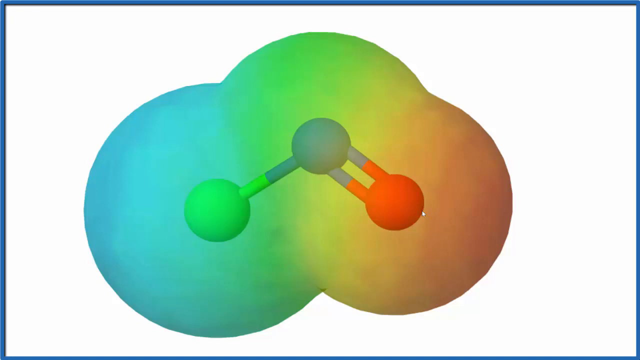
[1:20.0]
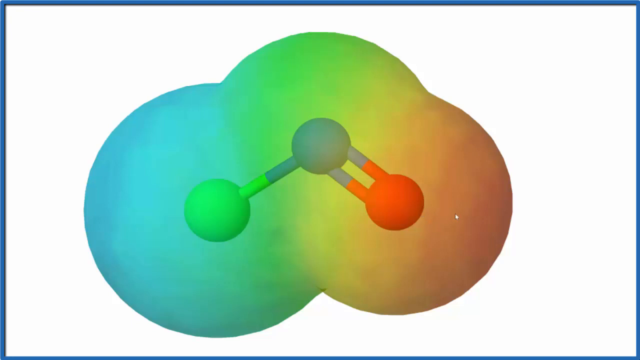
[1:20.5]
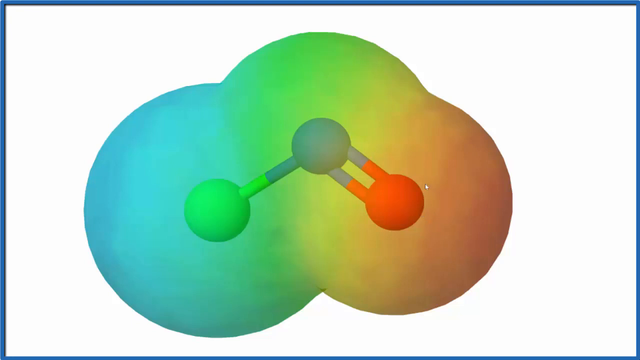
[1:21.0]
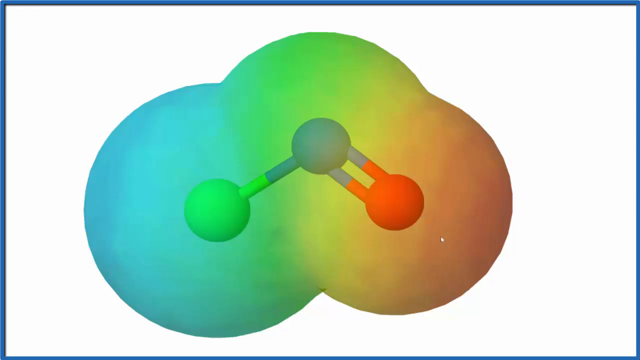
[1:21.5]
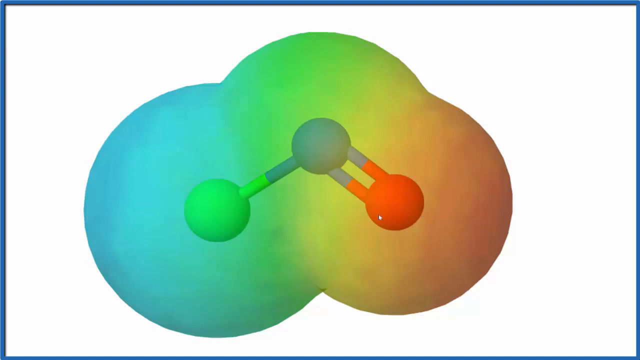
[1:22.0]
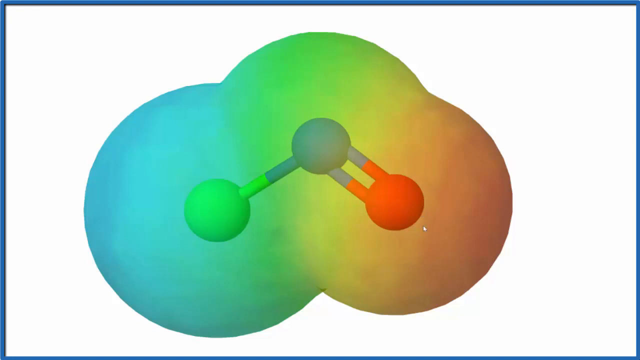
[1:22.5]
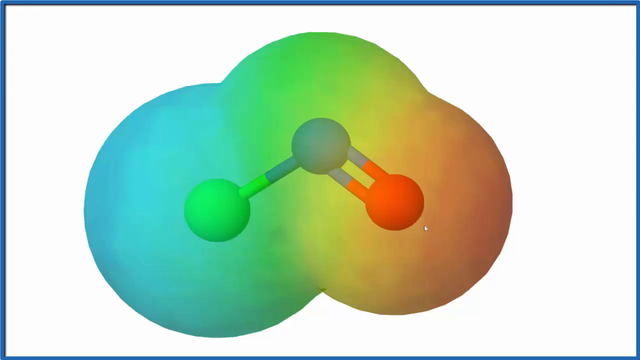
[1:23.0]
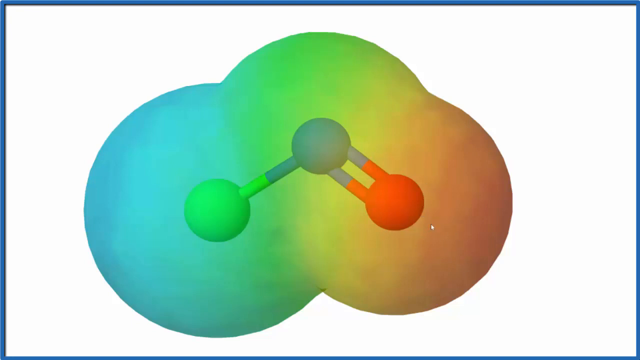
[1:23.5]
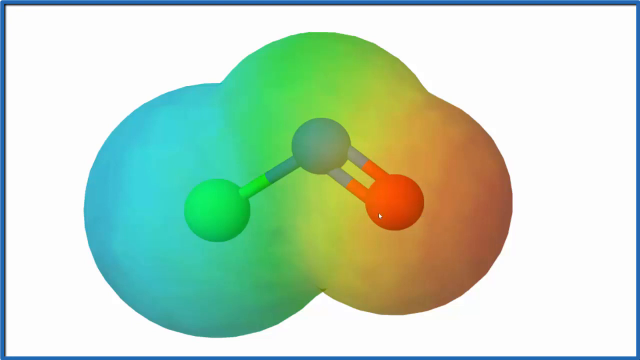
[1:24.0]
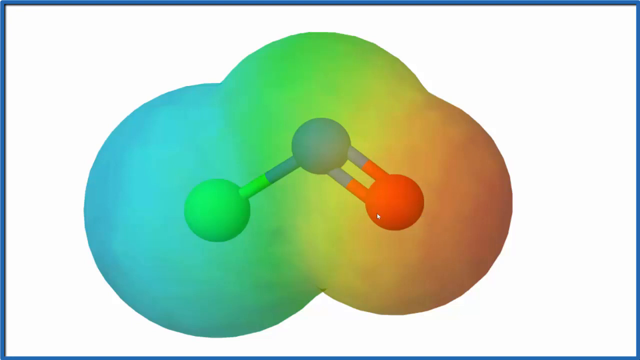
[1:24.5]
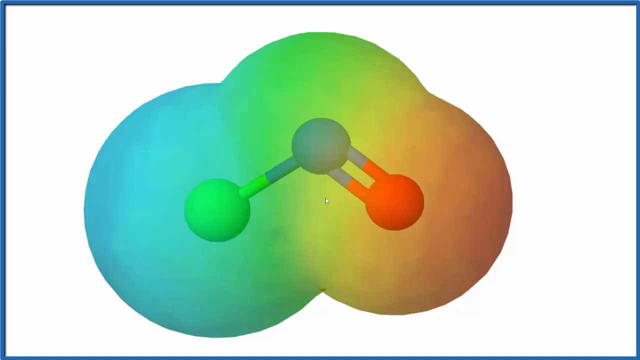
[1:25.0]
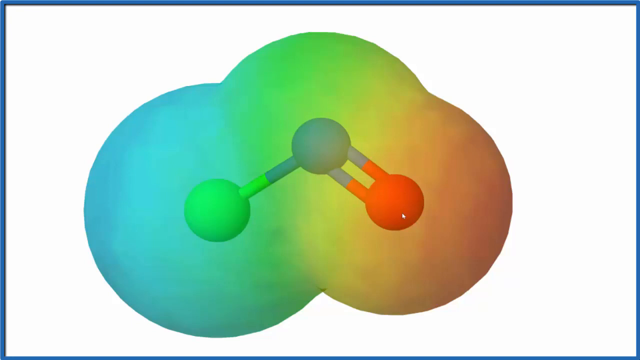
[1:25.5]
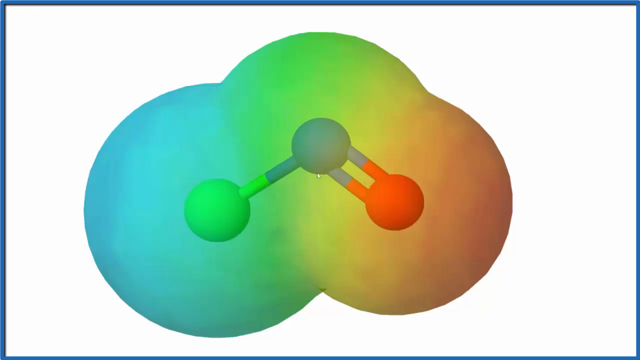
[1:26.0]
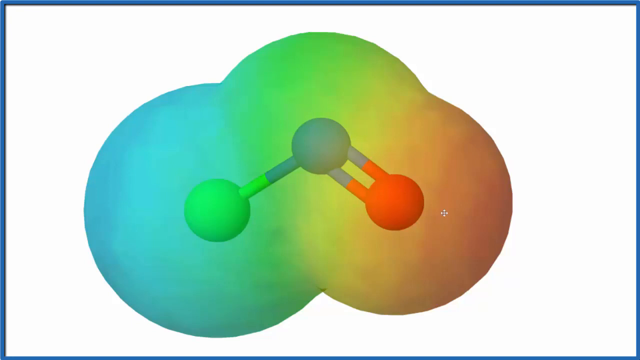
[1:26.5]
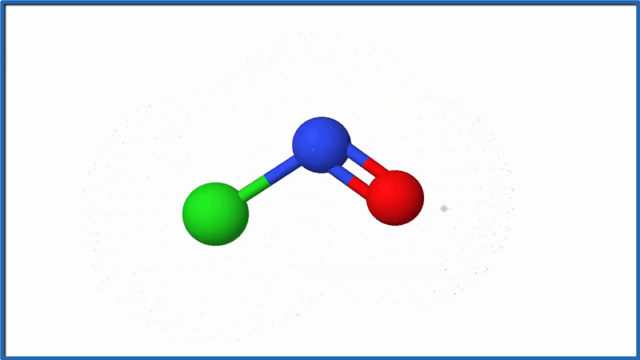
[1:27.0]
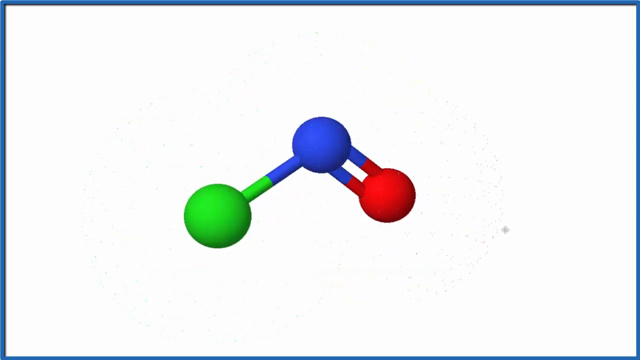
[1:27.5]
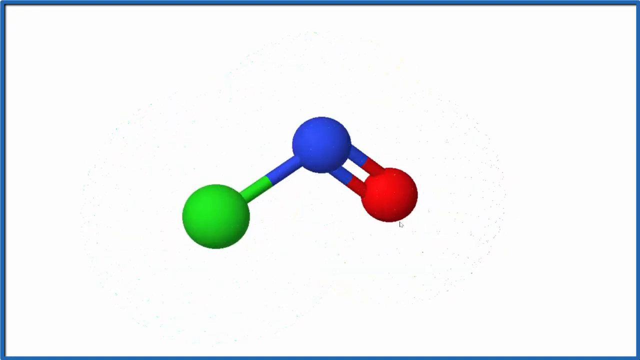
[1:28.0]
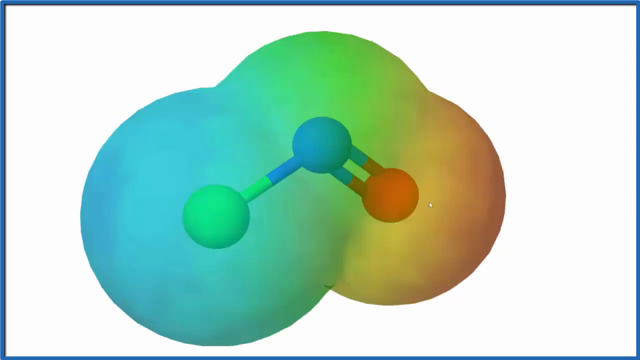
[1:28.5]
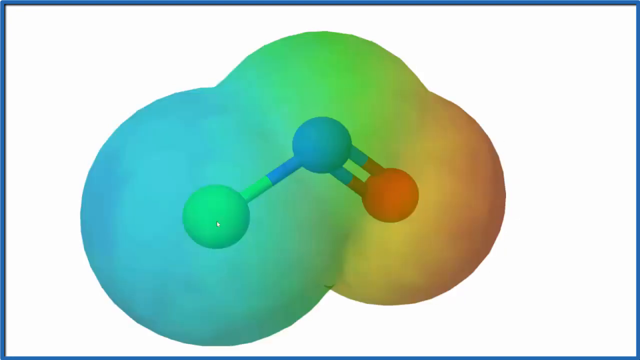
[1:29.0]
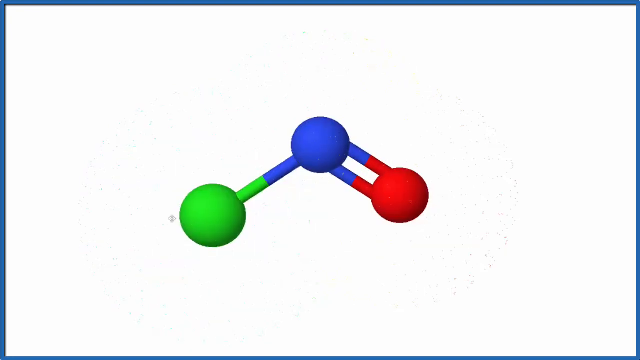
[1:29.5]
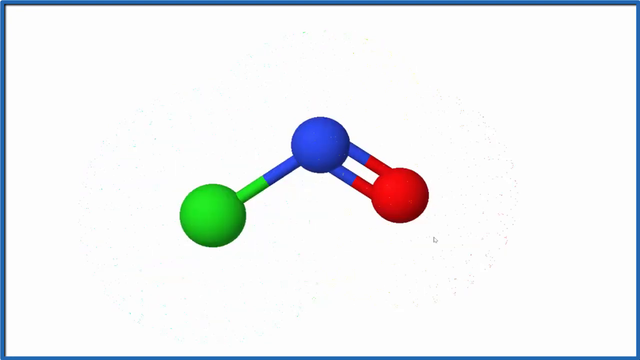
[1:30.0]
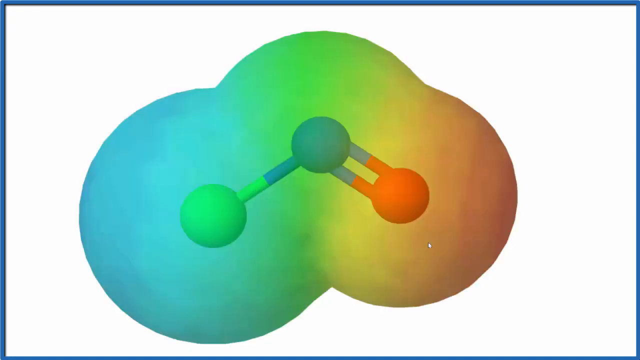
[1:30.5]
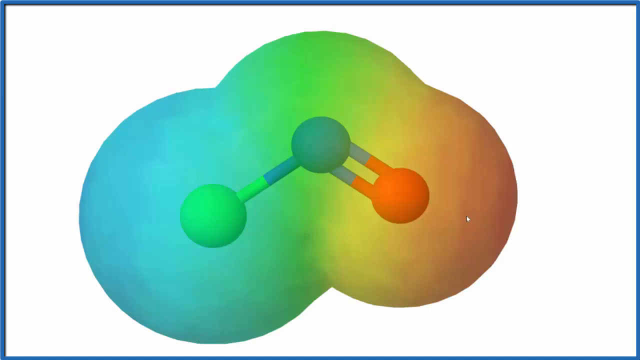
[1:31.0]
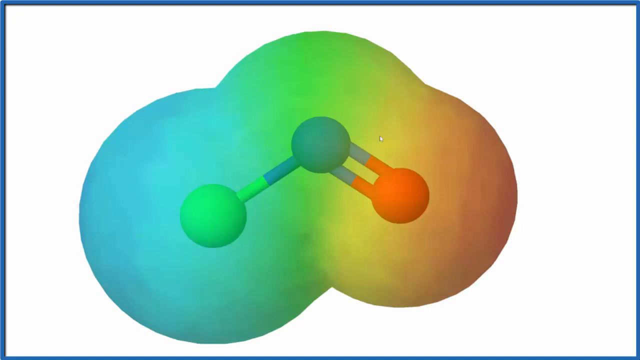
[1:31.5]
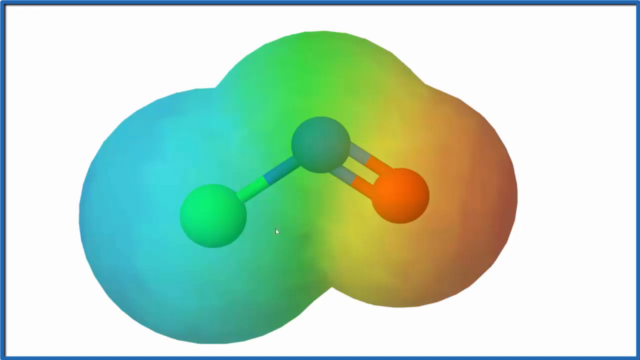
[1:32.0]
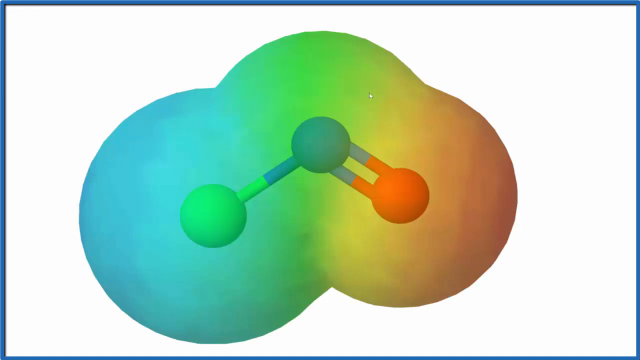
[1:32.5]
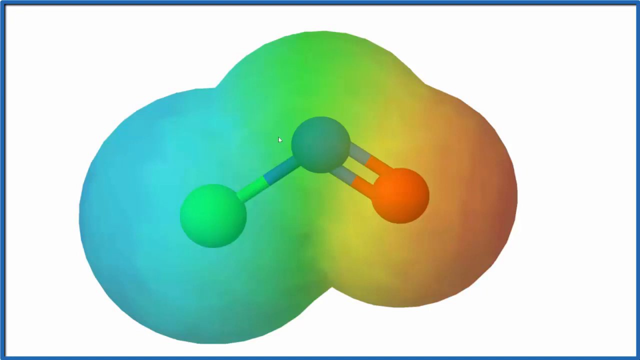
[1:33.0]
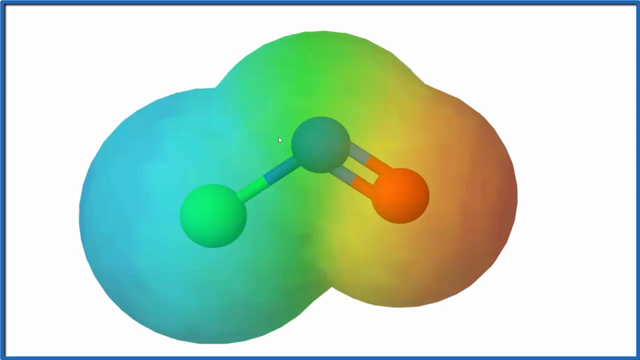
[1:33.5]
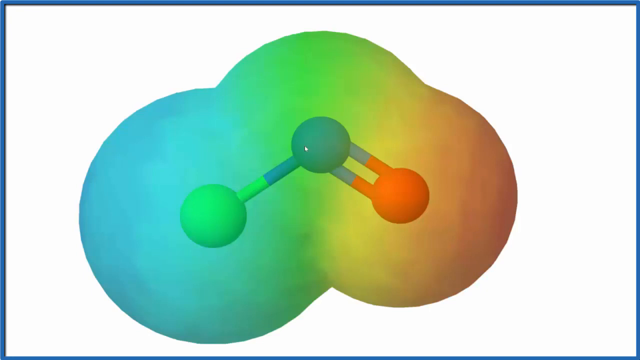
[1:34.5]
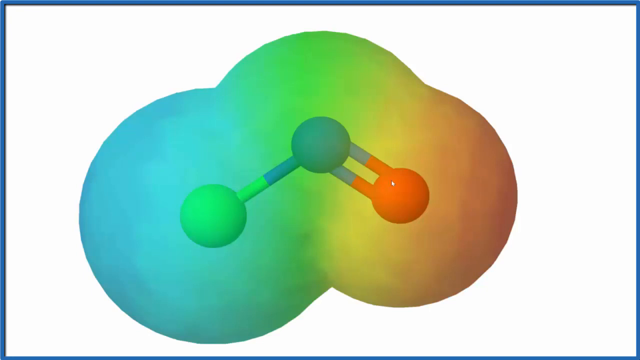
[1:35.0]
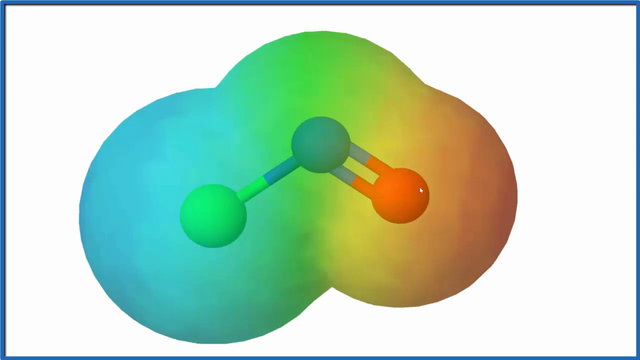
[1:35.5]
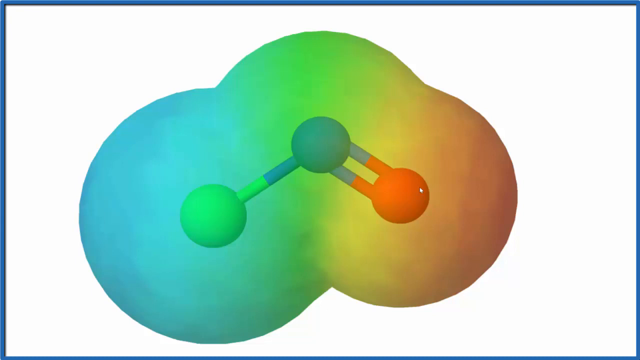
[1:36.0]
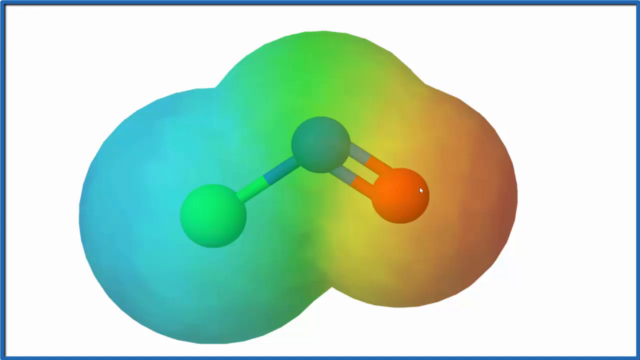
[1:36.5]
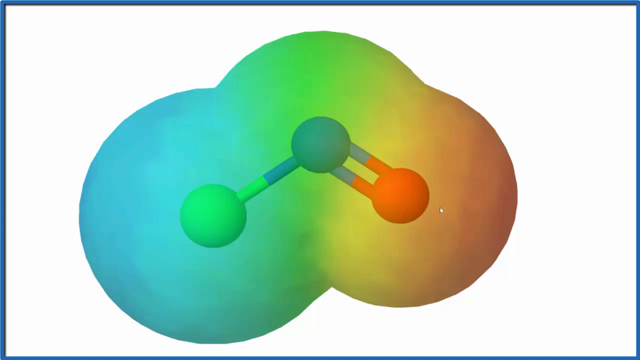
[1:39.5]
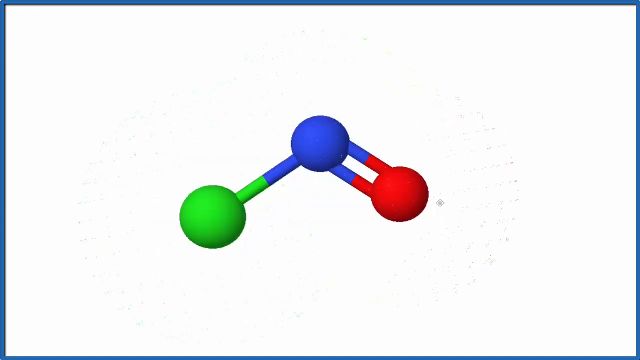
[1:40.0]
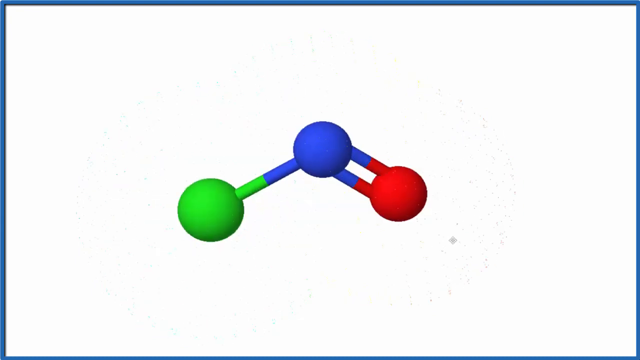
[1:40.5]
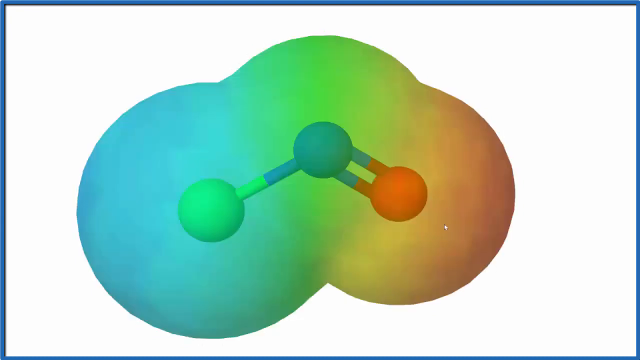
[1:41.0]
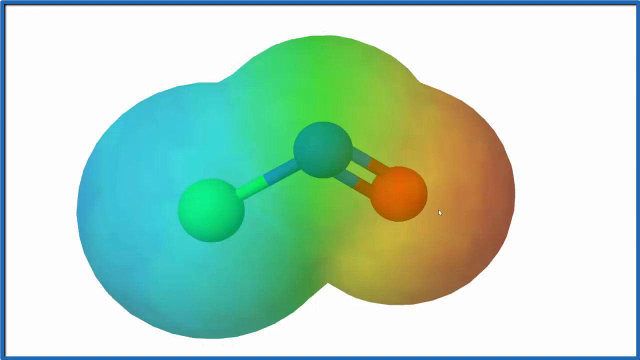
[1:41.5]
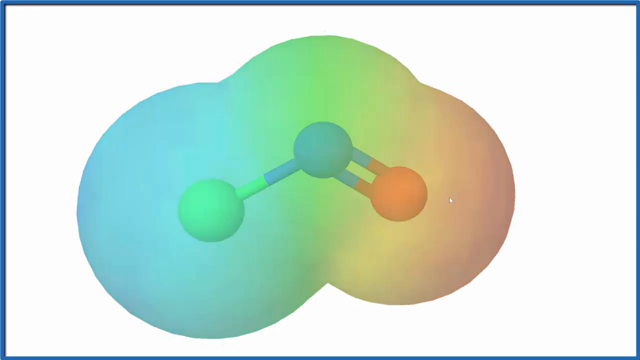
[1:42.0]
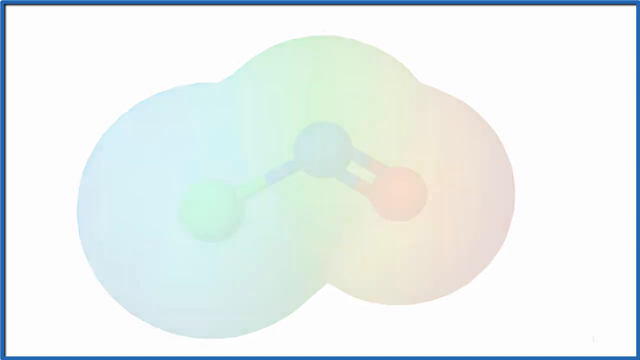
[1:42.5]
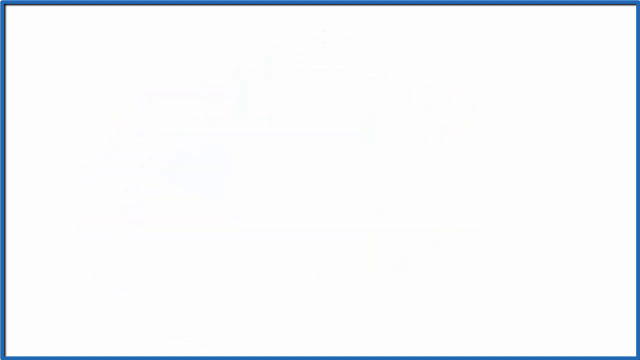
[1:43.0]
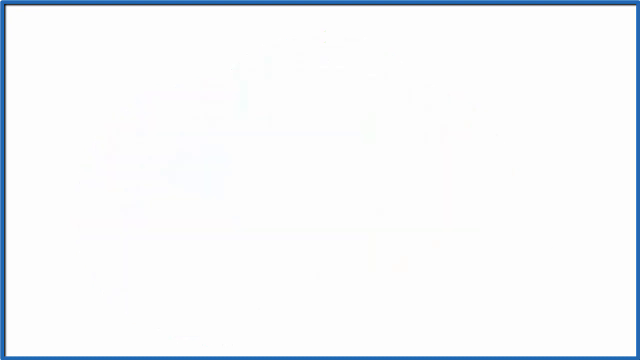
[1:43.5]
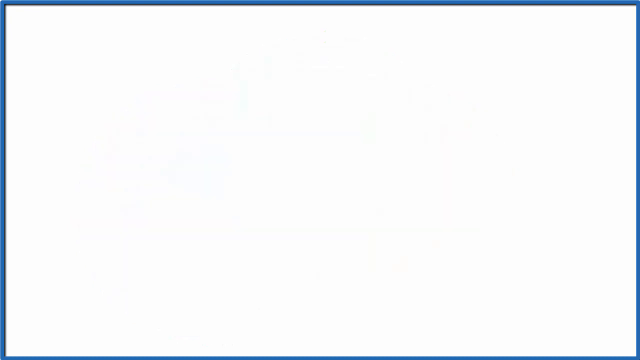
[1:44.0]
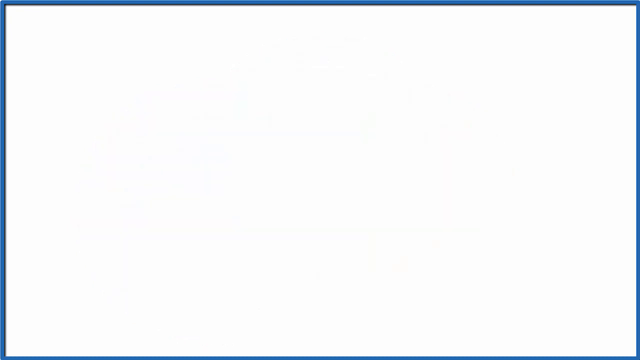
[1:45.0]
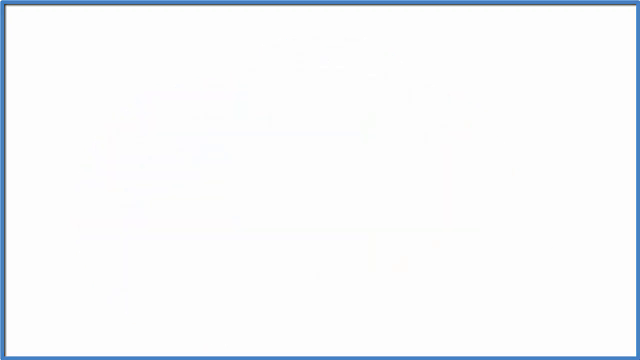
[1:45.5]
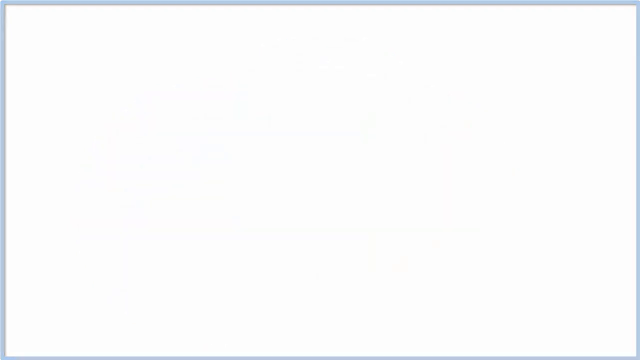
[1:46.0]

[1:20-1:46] The cloud shape is shown, rounded from the left corner down toward the bottom, rounded on the right side and rounded on the top. It is green on the top, light blue on the left and dark orange on the right. Inside it is a blue circle in the center with a little blue part coming down to the left that turns green, and the green circle; on the right side two blue ones come off, turn red halfway down, and go to a red circle. The cursor is just below this; it moves in a little circle, then moves up and circles around. The cloud disappears, the molecule expands out a little, down left and down right, and the cloud comes back over it. The cursor moves over to the green and clicks; the molecule expands out a little more and the cloud comes back over it, with the cursor moving on the left side up to the blue part. The cursor then hovers over the red circle. The cloud is clicked off, the circles are readjusted, and the video fades to white.